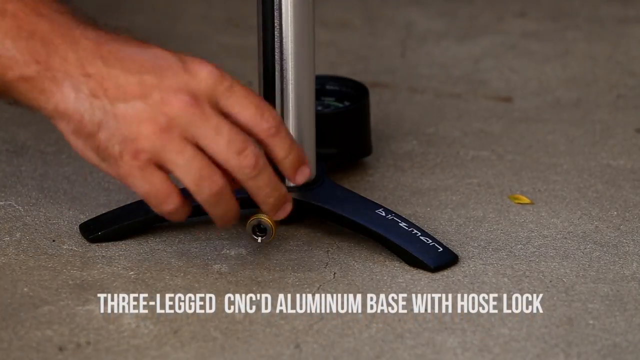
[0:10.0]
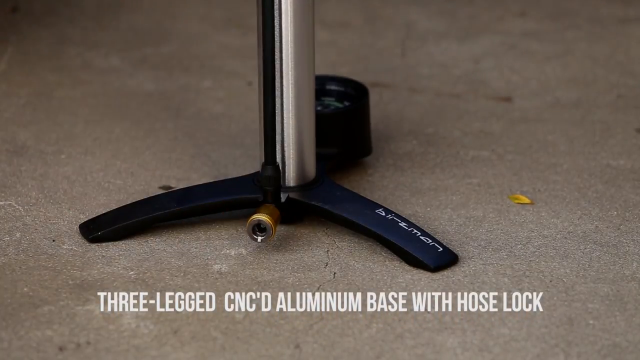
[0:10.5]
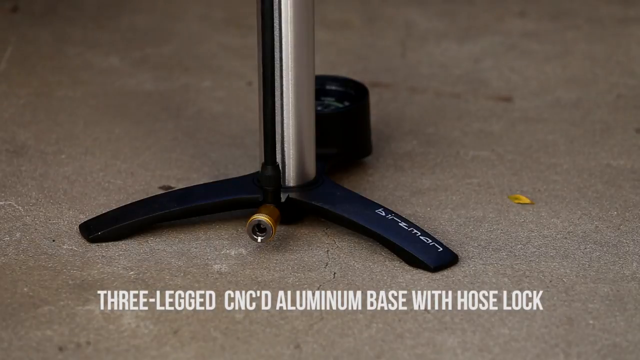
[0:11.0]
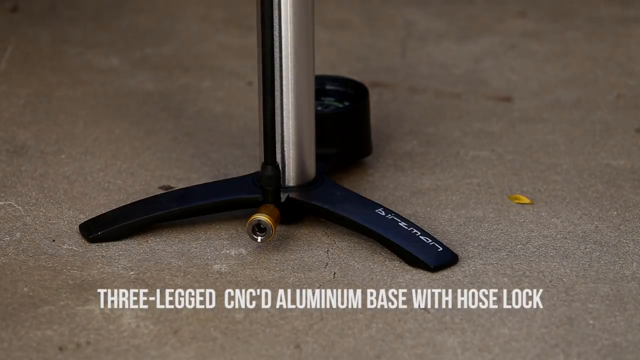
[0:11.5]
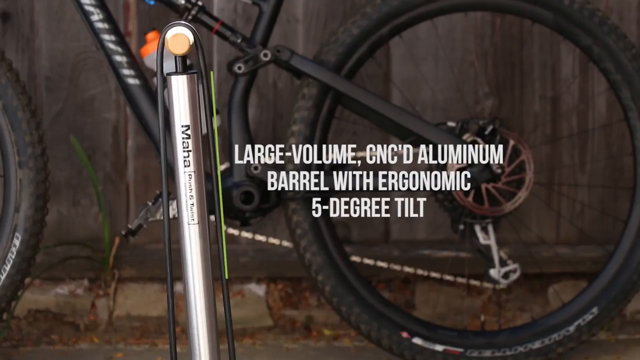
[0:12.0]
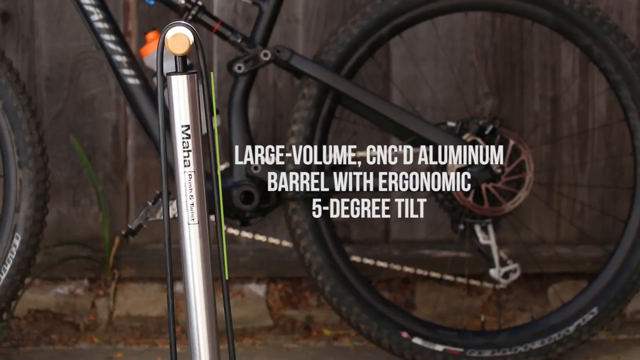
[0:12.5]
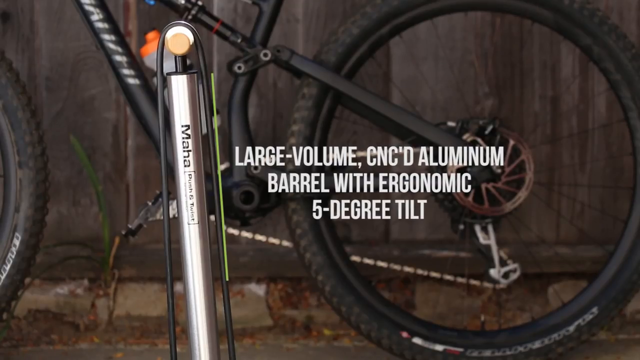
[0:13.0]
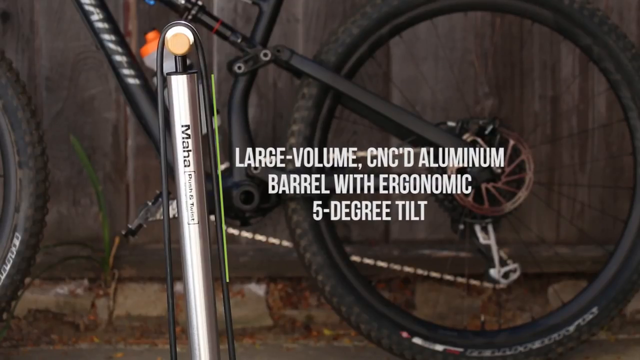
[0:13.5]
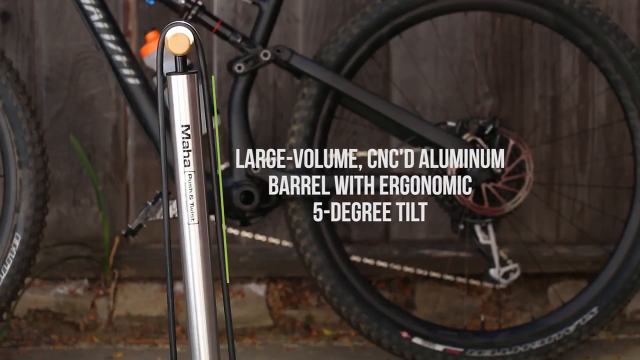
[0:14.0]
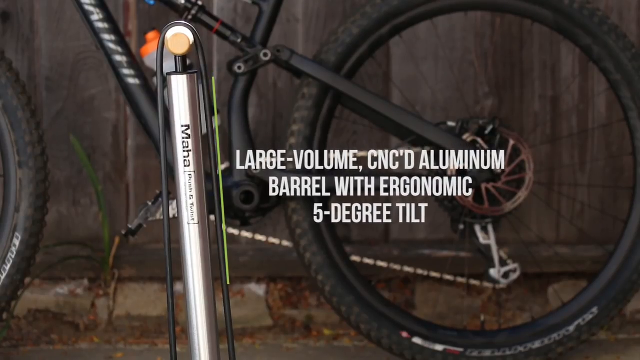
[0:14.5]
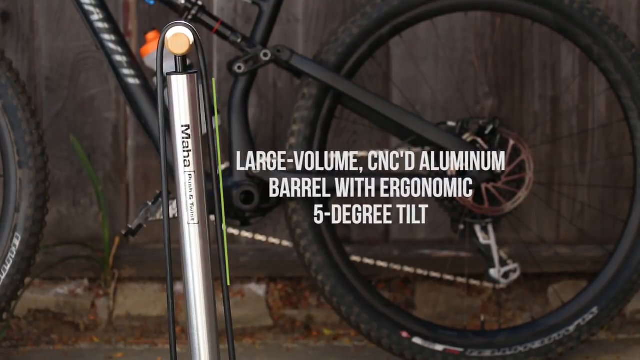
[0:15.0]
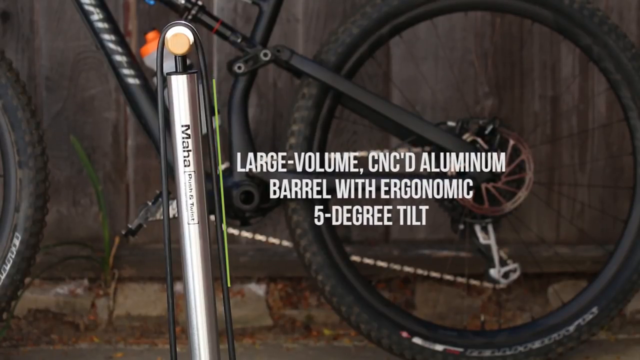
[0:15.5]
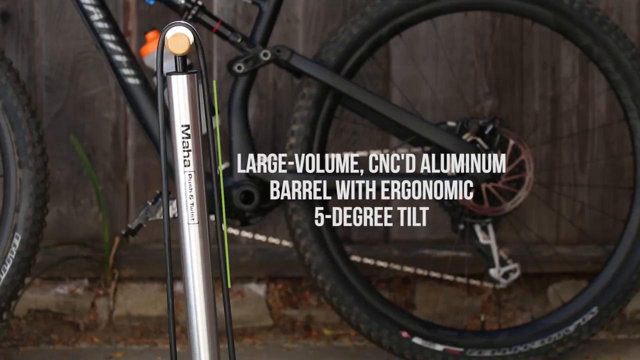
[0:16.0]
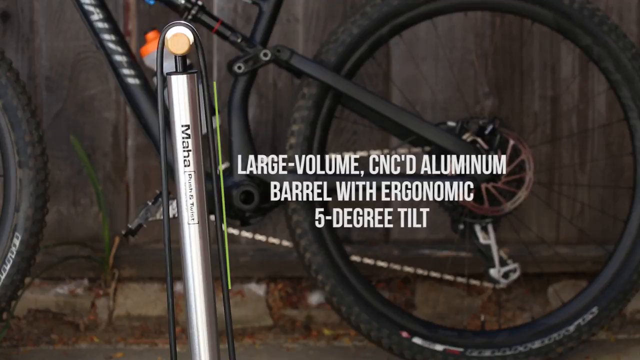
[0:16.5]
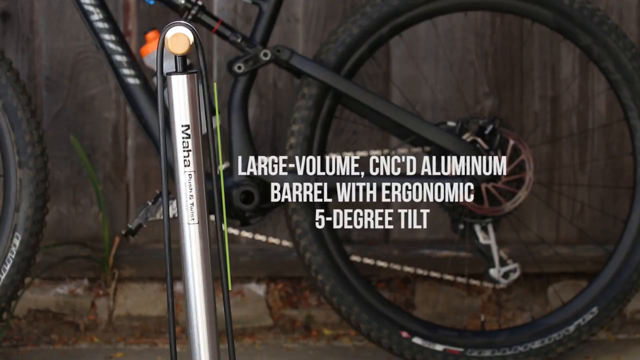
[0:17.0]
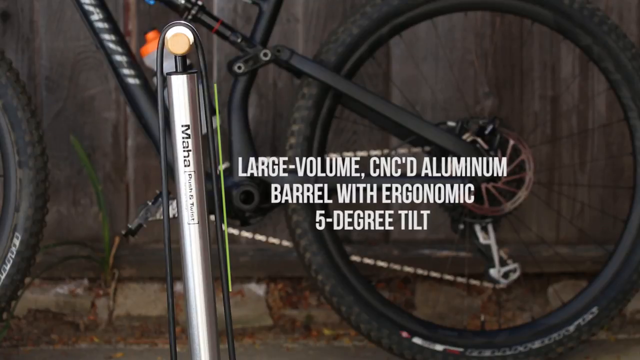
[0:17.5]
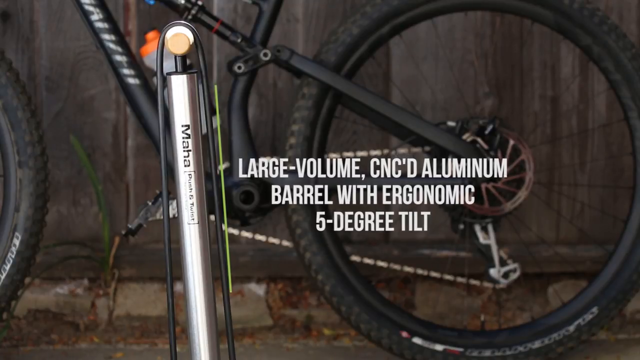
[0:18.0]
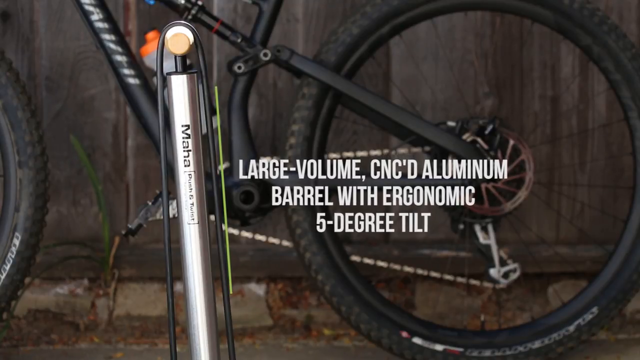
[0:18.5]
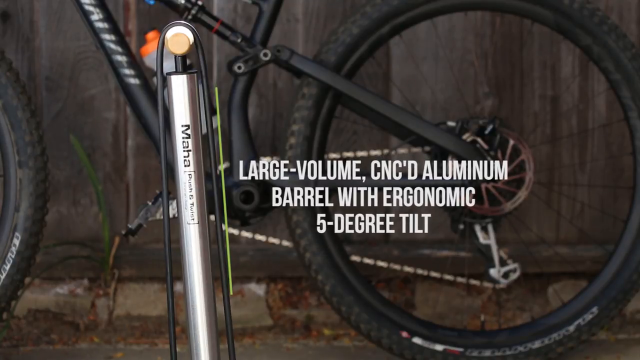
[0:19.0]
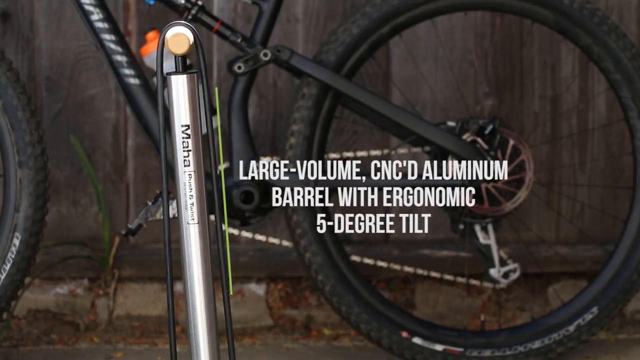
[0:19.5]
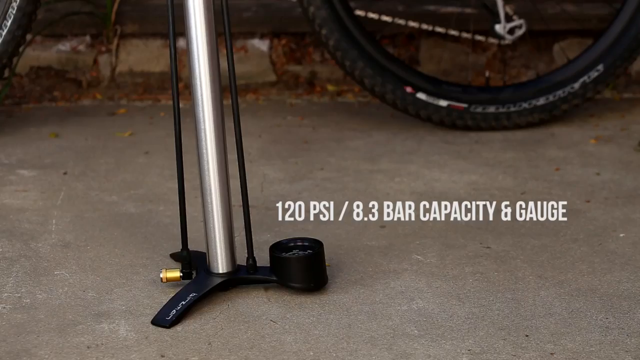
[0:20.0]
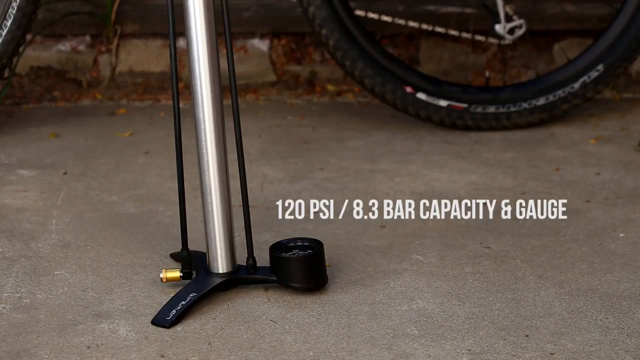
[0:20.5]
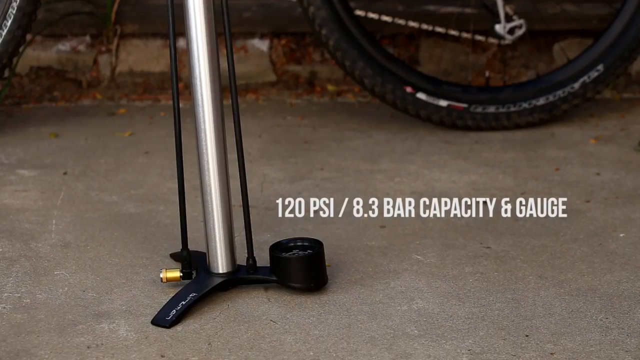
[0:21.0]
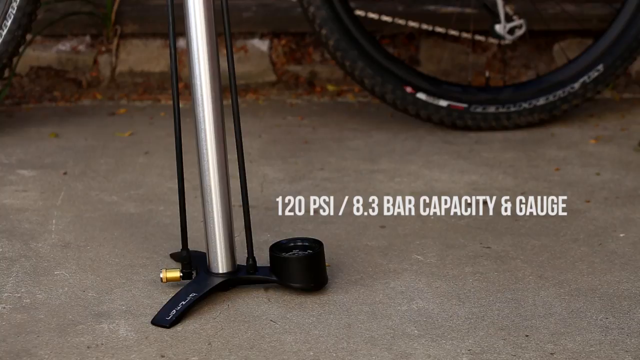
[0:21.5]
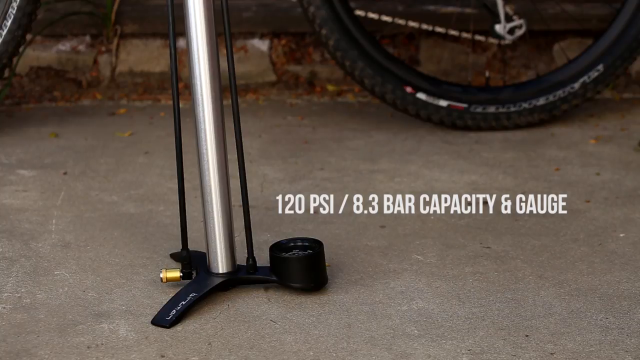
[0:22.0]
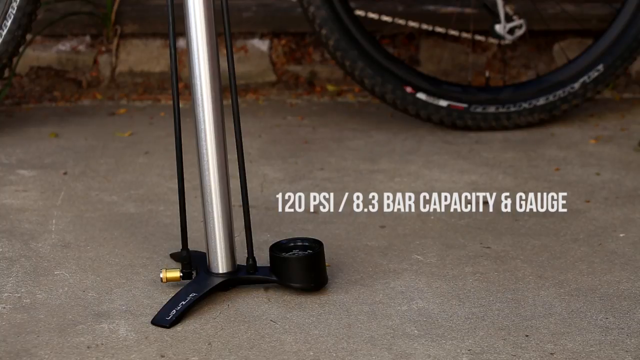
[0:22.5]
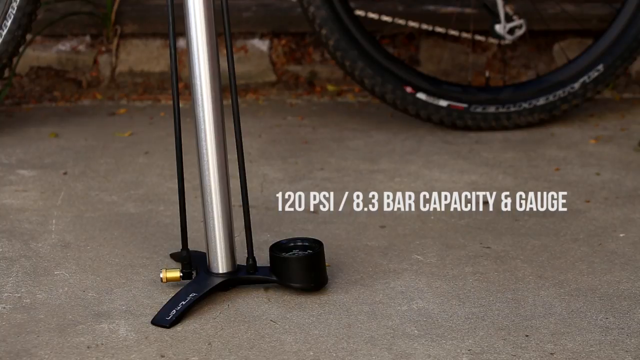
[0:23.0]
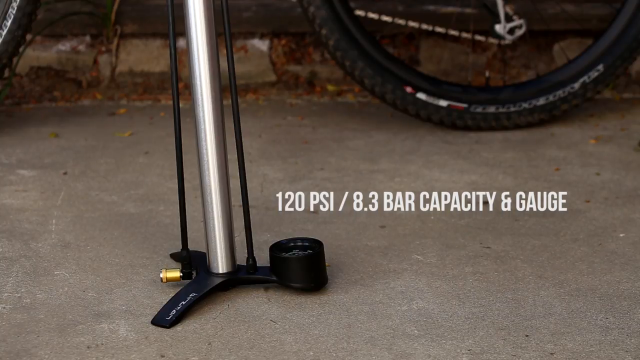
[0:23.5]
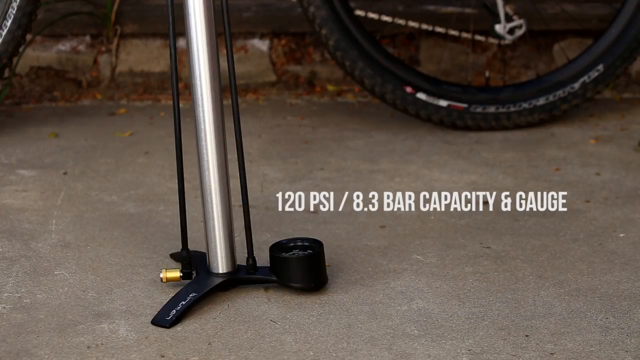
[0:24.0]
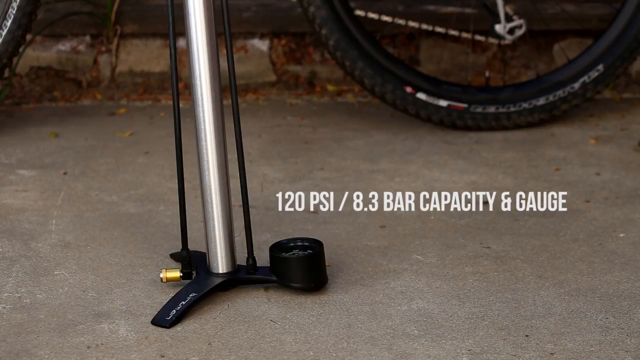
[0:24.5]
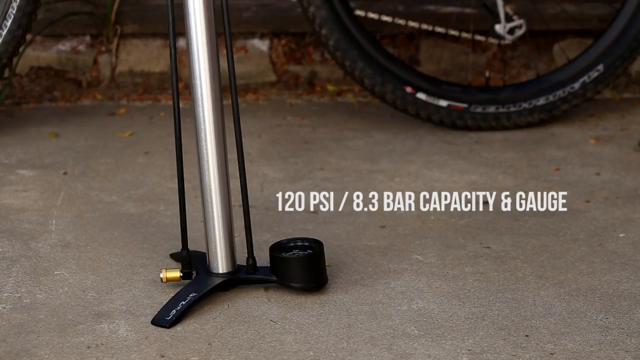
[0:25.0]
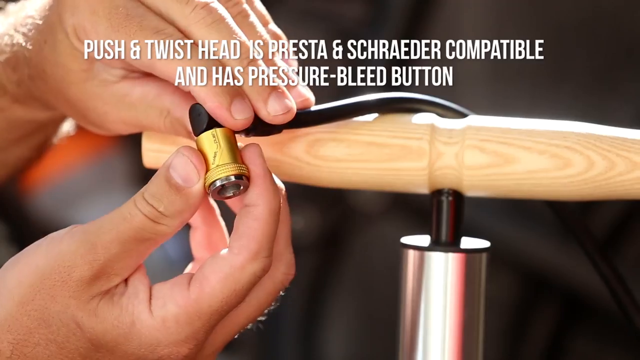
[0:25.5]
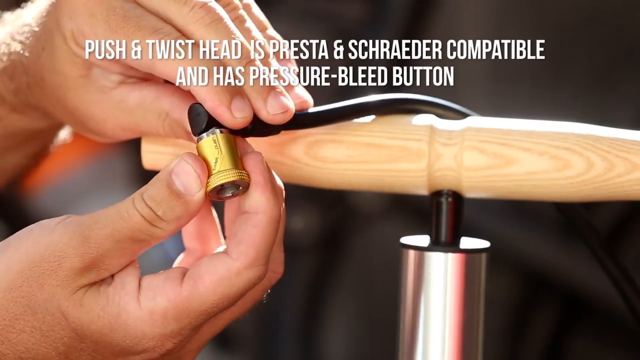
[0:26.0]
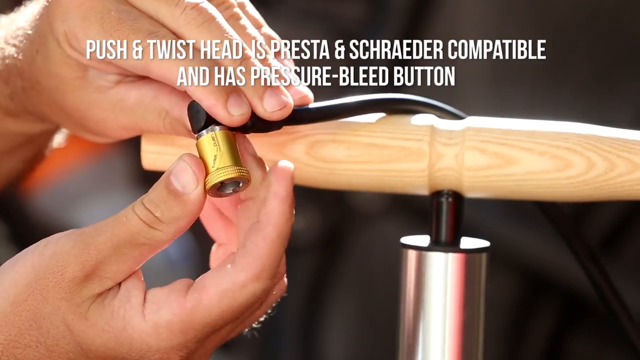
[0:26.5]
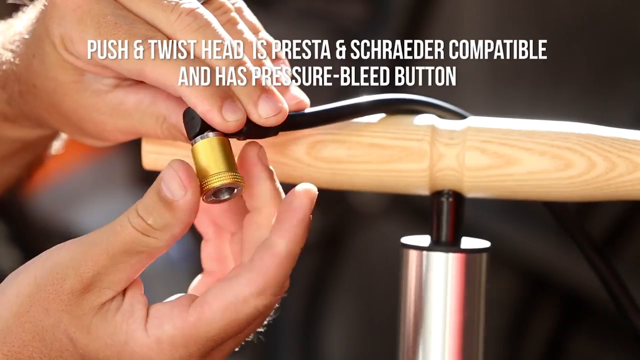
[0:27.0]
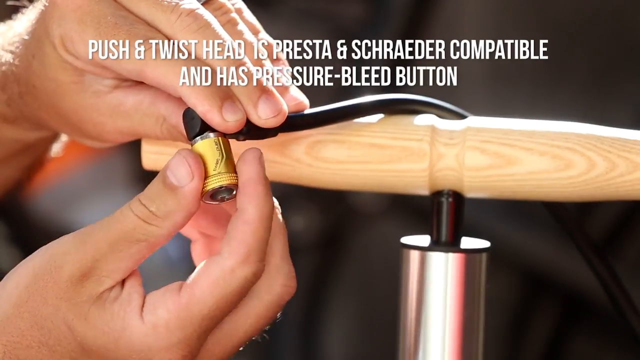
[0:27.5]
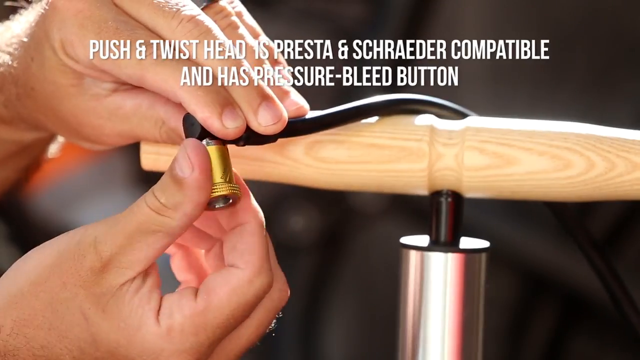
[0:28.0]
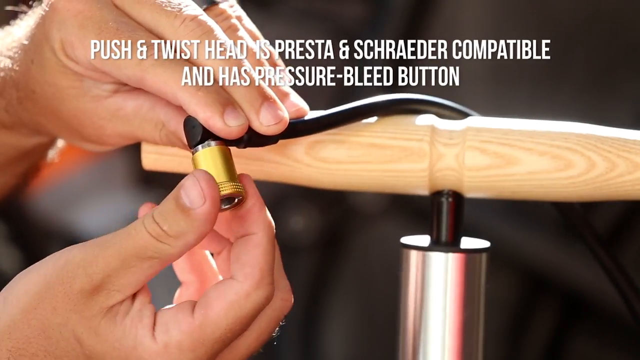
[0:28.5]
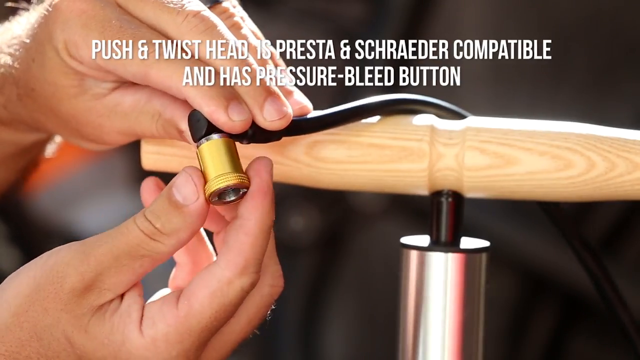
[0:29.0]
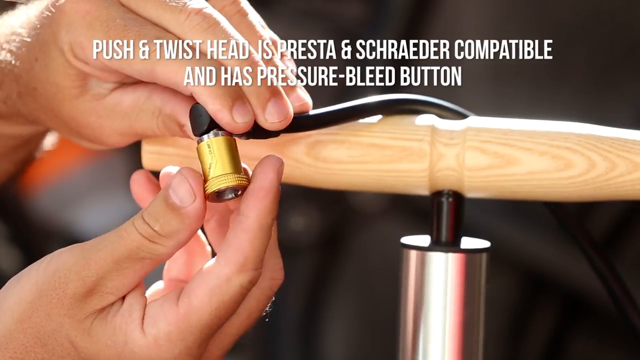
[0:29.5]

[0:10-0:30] A measurement is displayed around the gauge used to fill air into the wheels. The bicycle is visible, along with its wheels, its chains and a water pump. The measurement capacity of the air gauge is also displayed. A person's hand holds the gauge and the equipment used to pump air into the bicycle's wheels. The bicycle is standing in a space that appears to be inside a house or a garage. Instructions on how to use the pressure pump to pump air into the wheel are displayed, telling the user to "push and twist". Some of the written words are in a different language and are not easy to read.